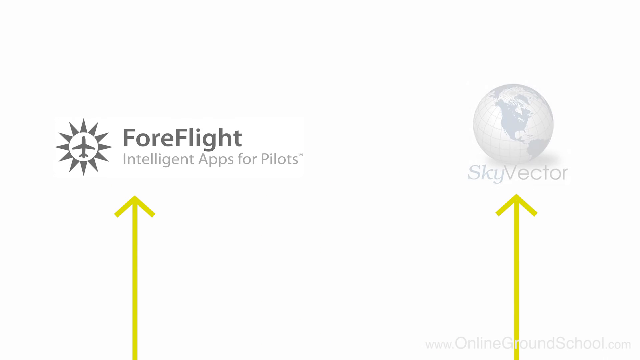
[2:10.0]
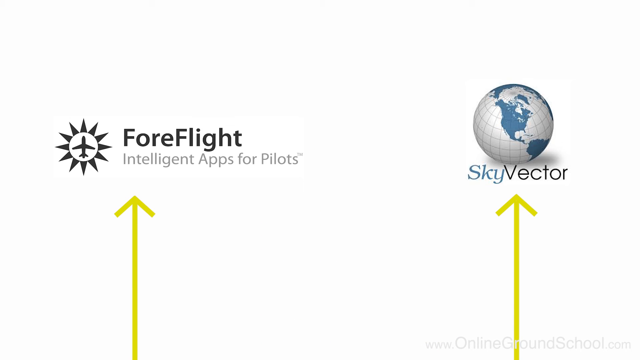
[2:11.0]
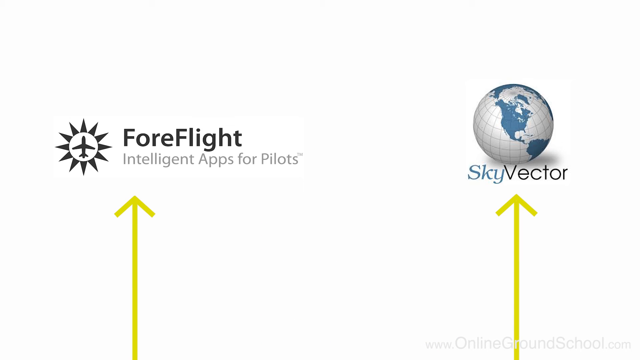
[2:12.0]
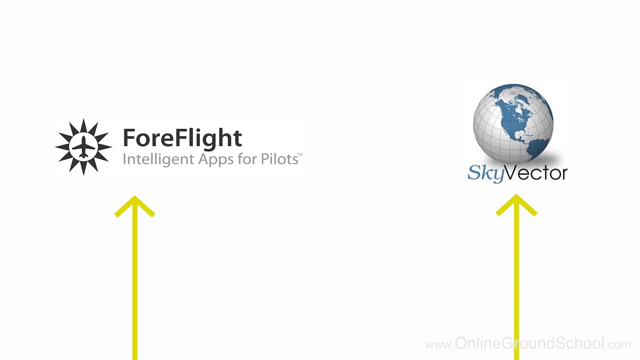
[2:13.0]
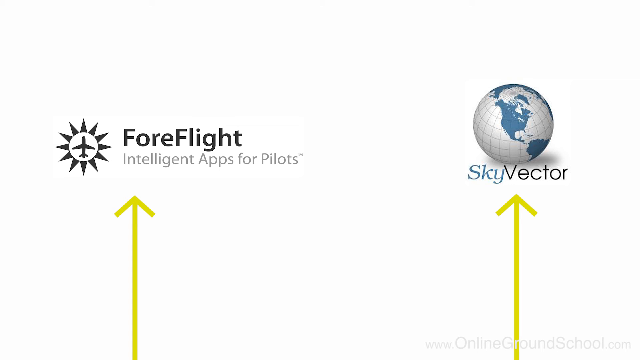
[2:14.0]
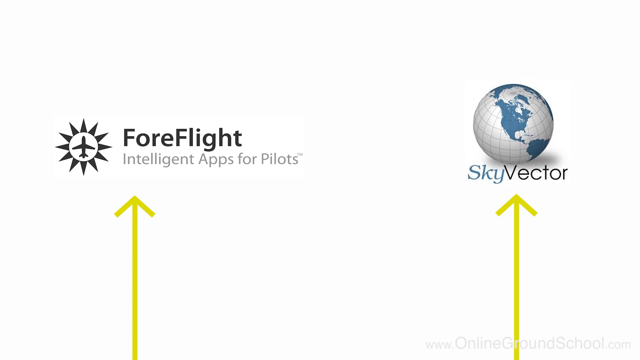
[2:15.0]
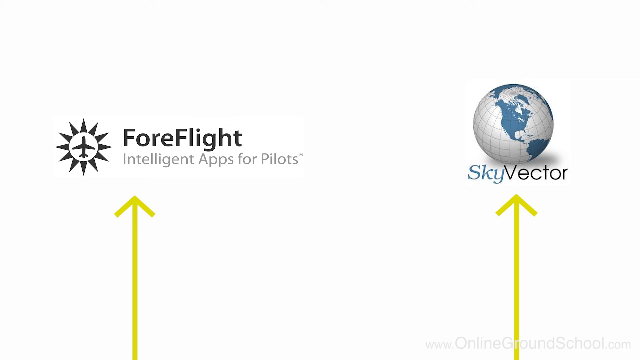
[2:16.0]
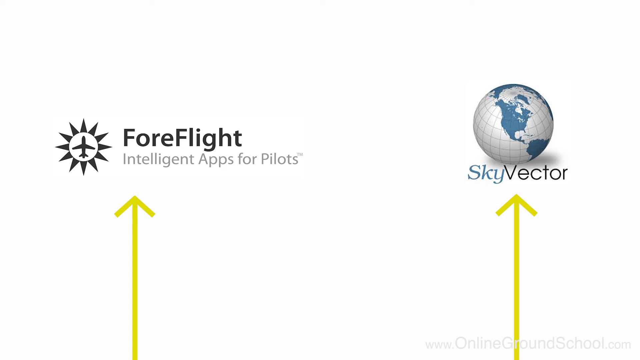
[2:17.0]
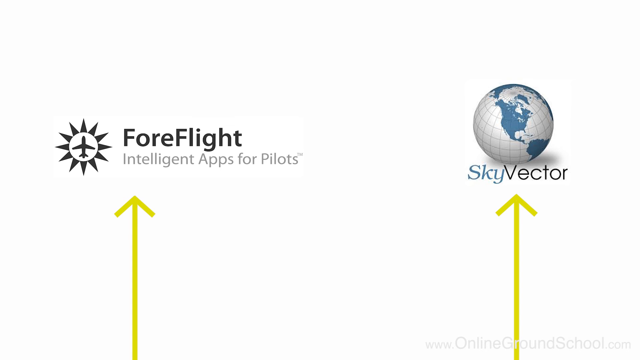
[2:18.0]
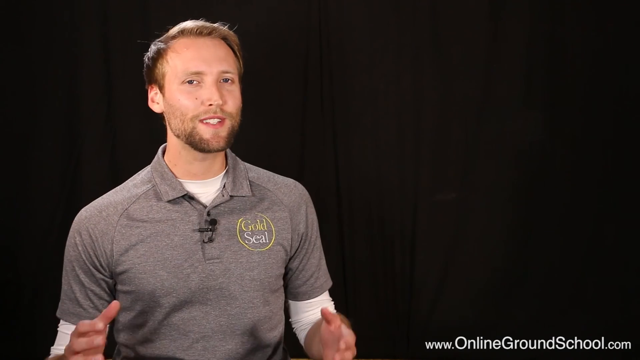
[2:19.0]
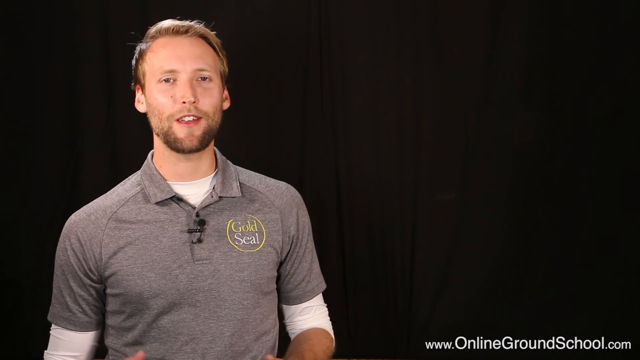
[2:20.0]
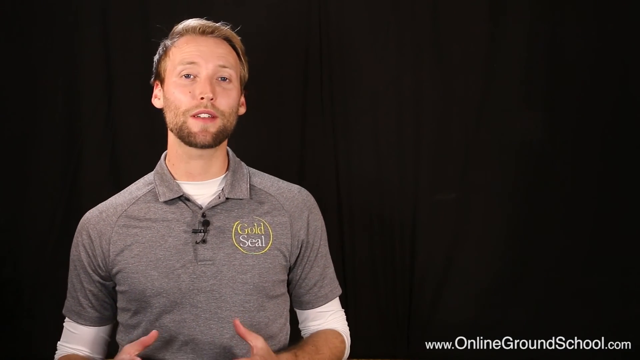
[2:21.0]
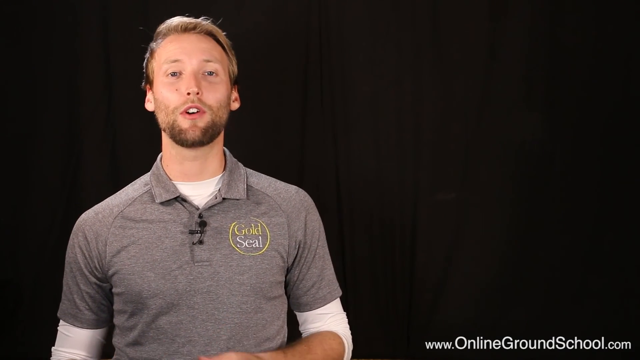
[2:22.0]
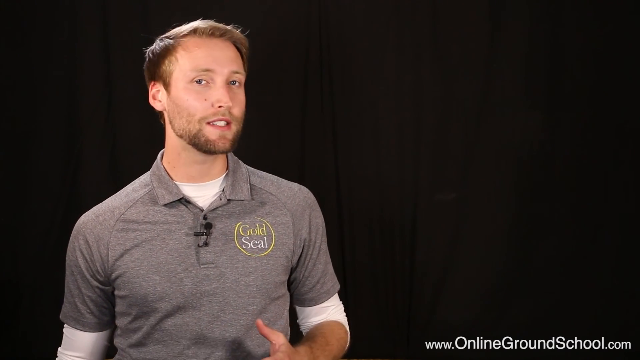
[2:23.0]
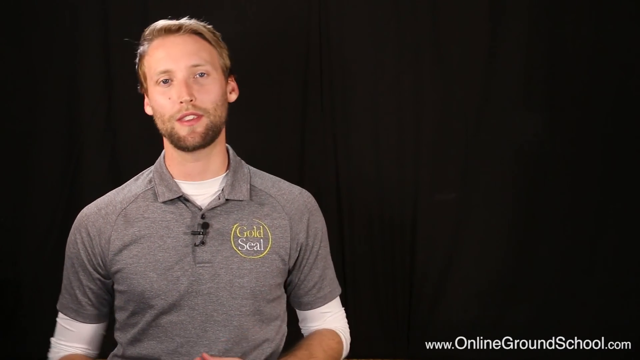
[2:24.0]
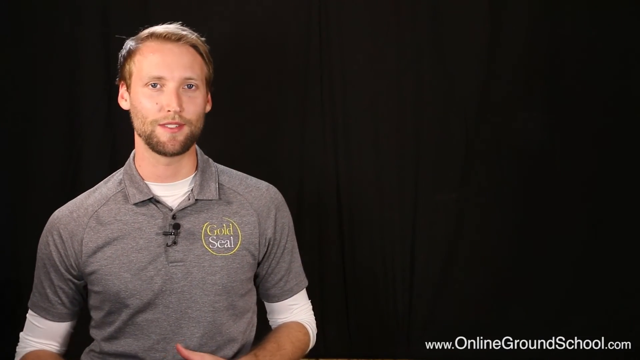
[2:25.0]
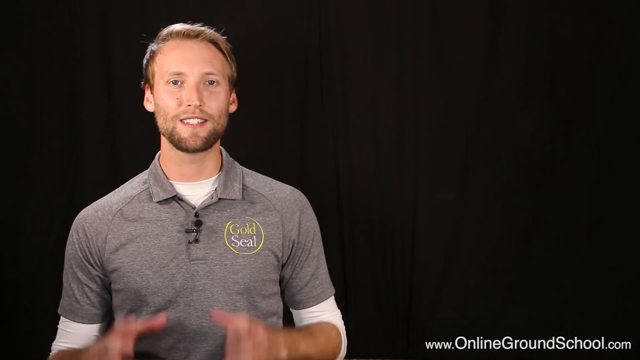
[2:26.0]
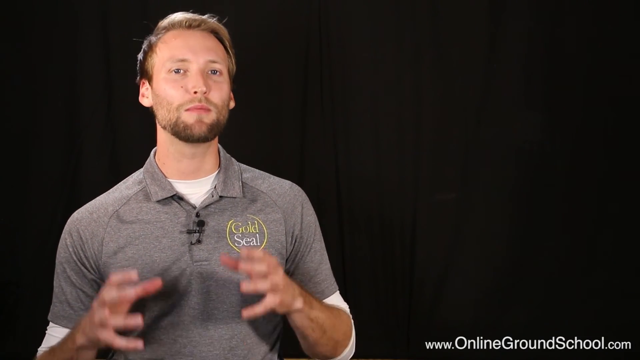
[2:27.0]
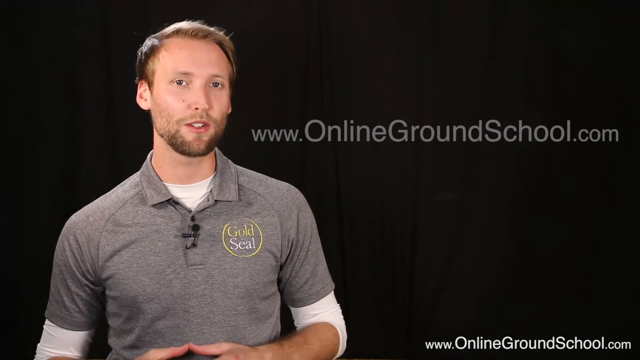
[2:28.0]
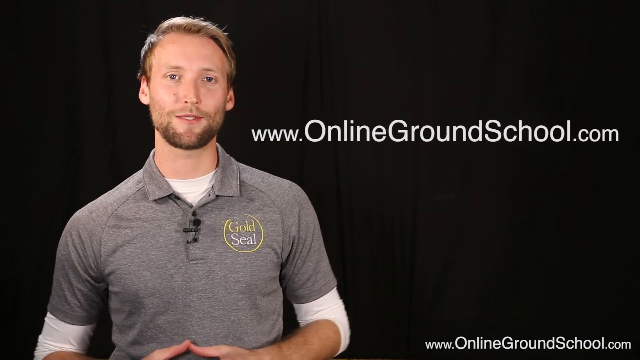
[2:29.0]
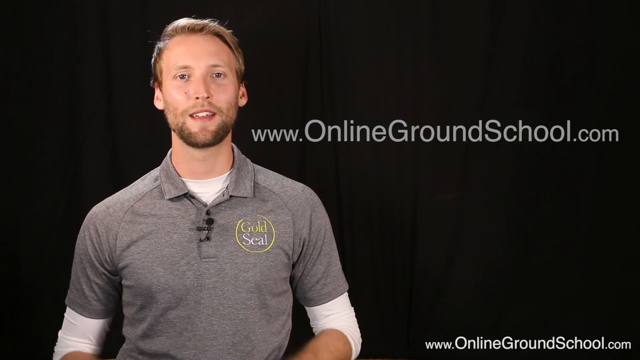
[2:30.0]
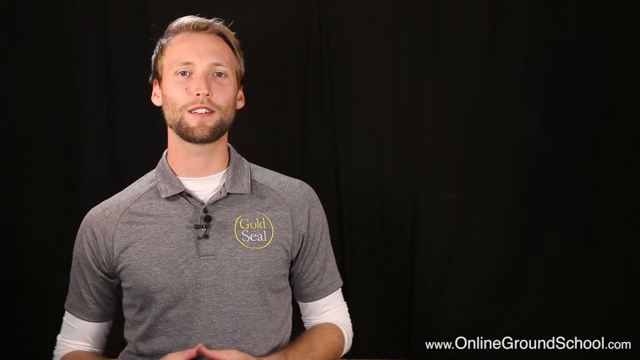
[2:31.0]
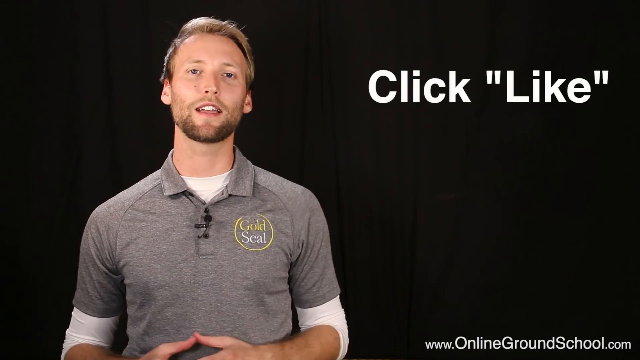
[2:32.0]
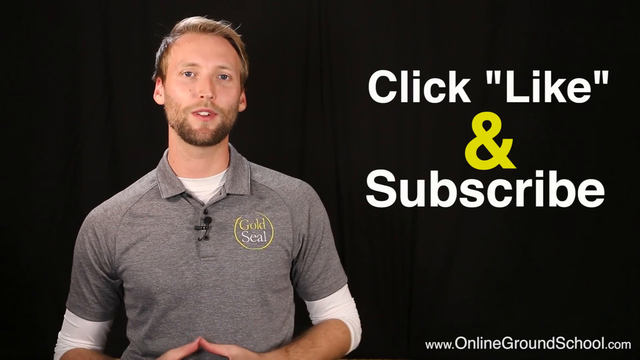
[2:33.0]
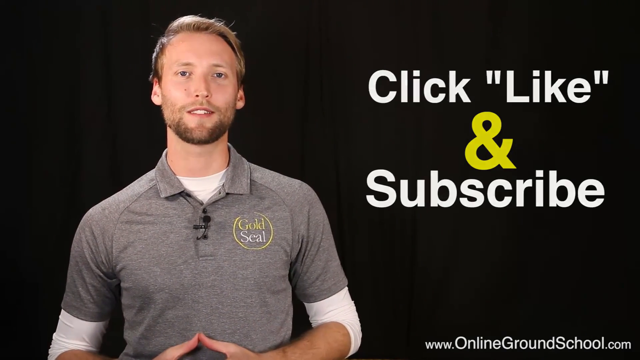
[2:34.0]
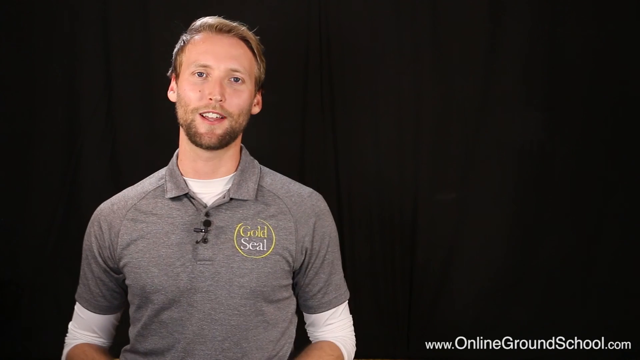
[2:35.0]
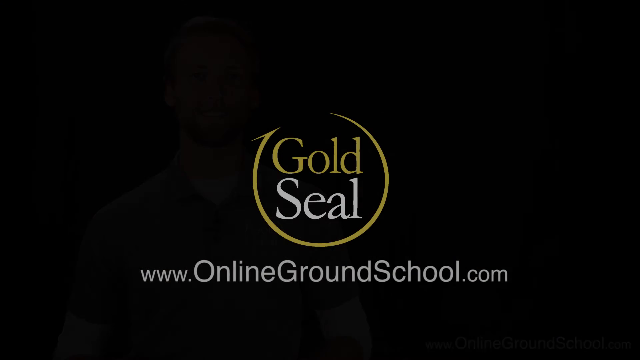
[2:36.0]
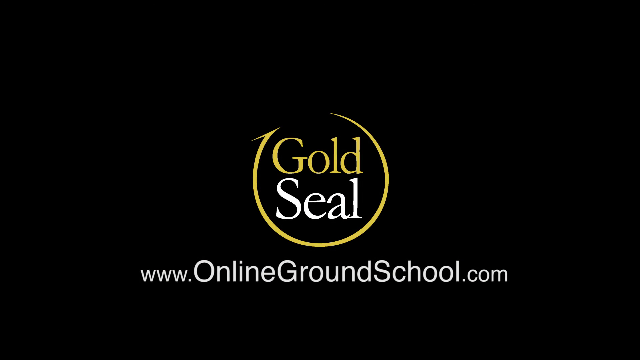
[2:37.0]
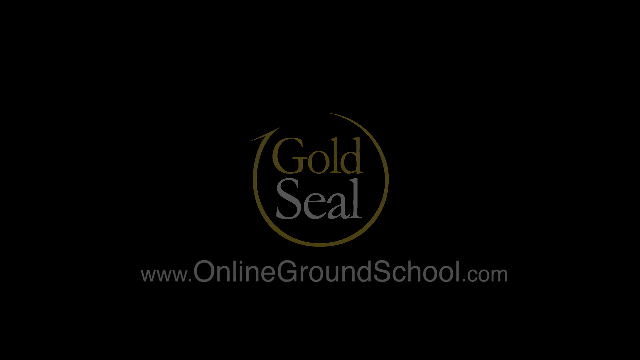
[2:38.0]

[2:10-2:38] A page with a white background shows two logos: one for ForeFlight, "Intelligent Apps for Pilots", and on the right side Sky Vector. Each has an arrow pointing upwards from the bottom of the screen. The video transitions to a man standing on the left-hand side against a solid black background. He wears a grey t-shirt with a Gold Seal logo and has a microphone attached to his t-shirt, and he talks towards the camera. His hands are out in front of him; at times they appear in view, but they are generally clasped together. On the right side, text appears asking viewers to like and subscribe to the channel. The video then transitions to a black screen with a Gold Seal logo and, below it, a web address reading "www.onlinegroundschool.com".